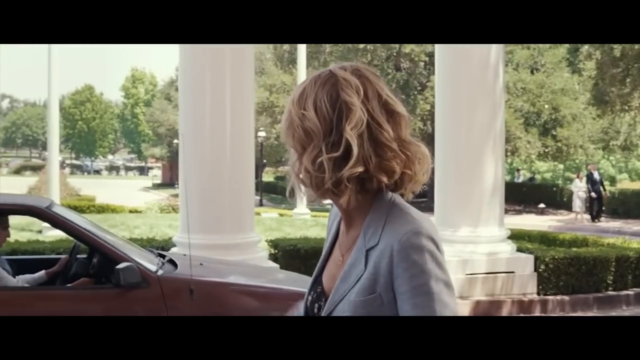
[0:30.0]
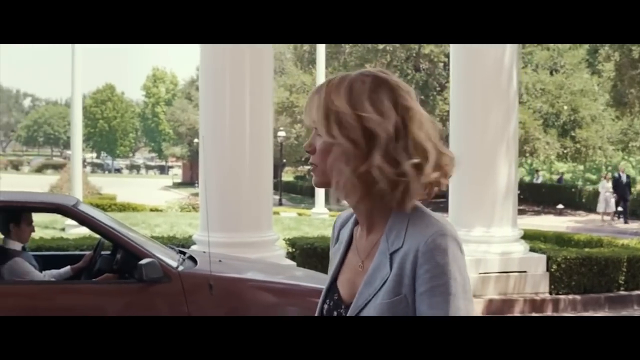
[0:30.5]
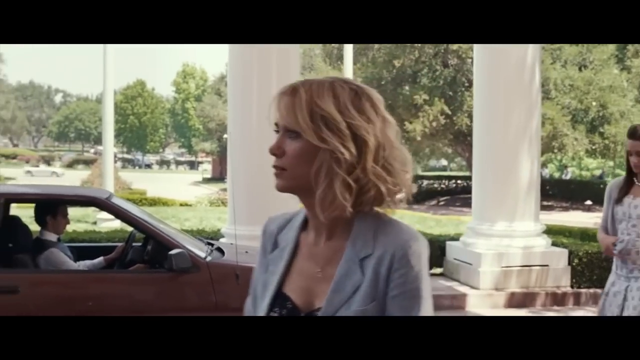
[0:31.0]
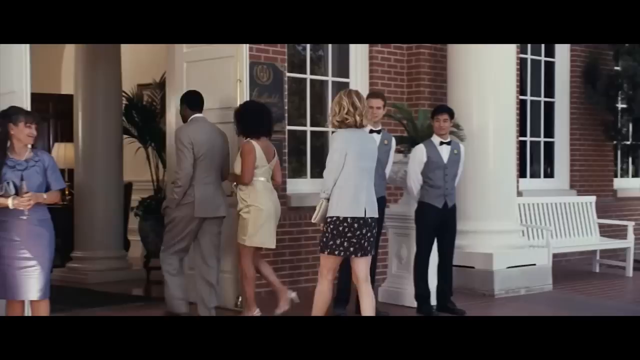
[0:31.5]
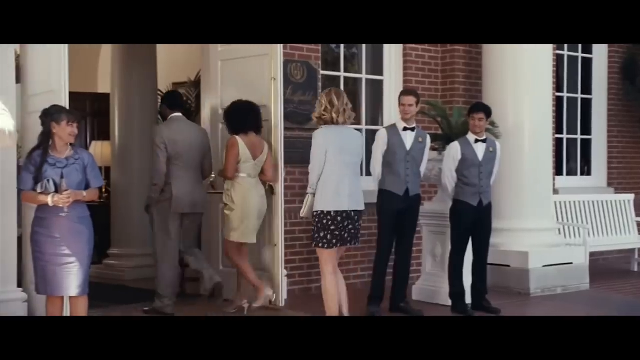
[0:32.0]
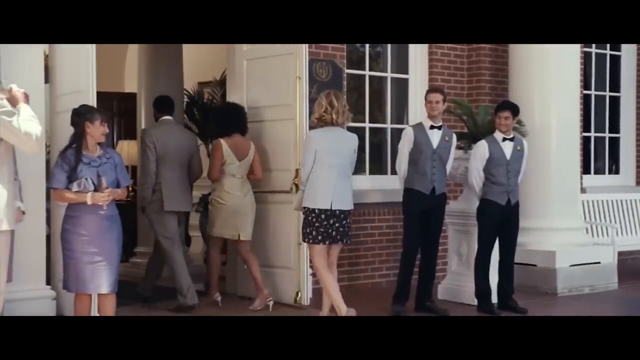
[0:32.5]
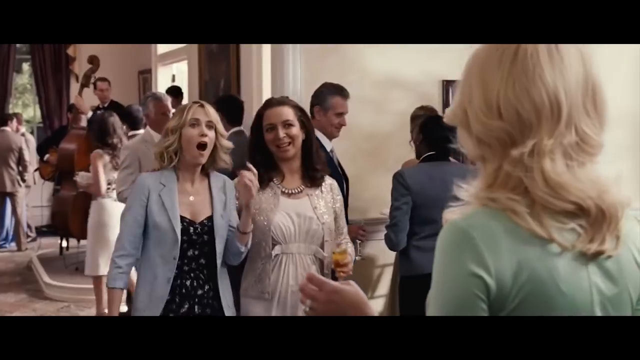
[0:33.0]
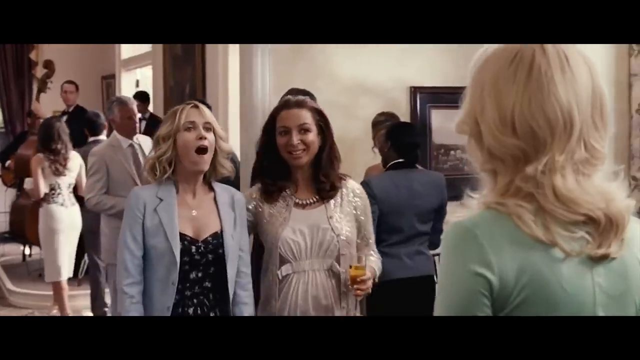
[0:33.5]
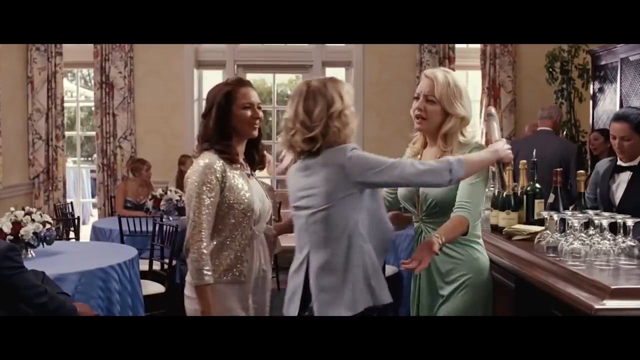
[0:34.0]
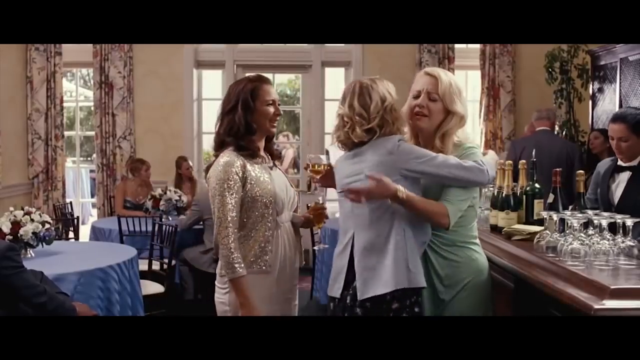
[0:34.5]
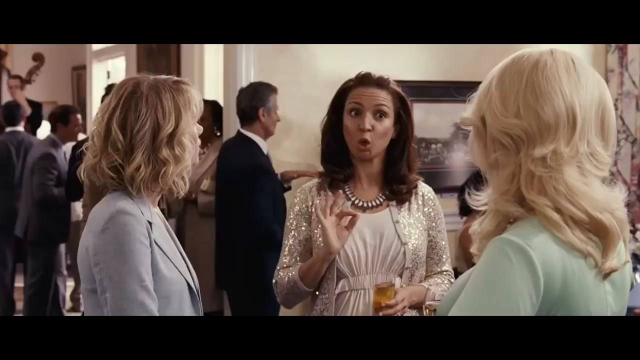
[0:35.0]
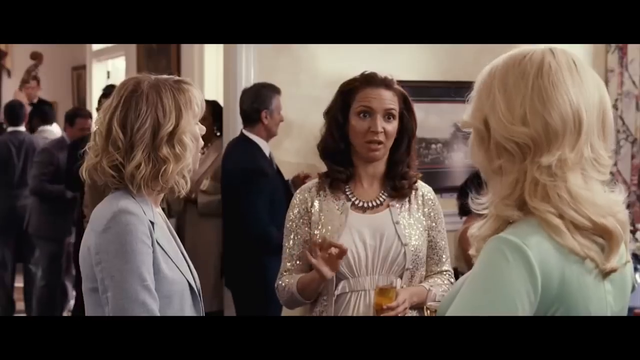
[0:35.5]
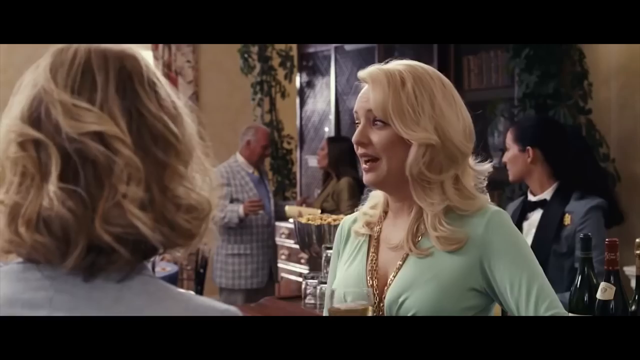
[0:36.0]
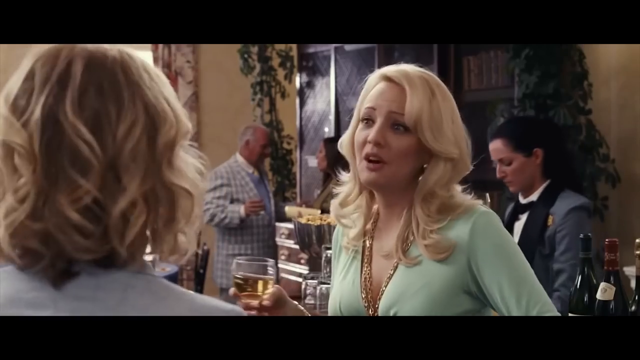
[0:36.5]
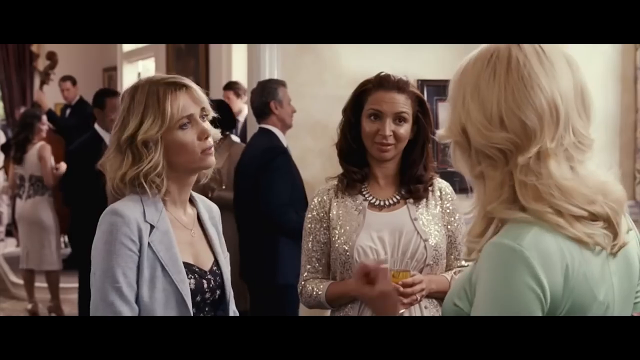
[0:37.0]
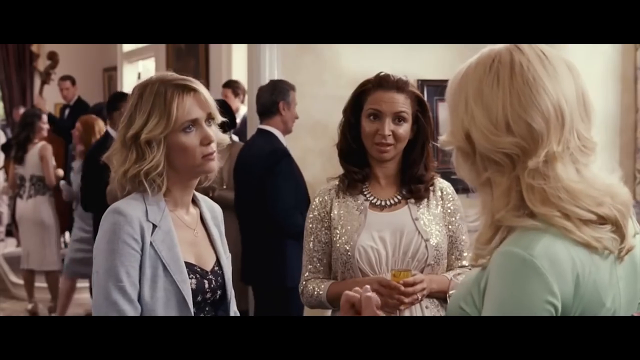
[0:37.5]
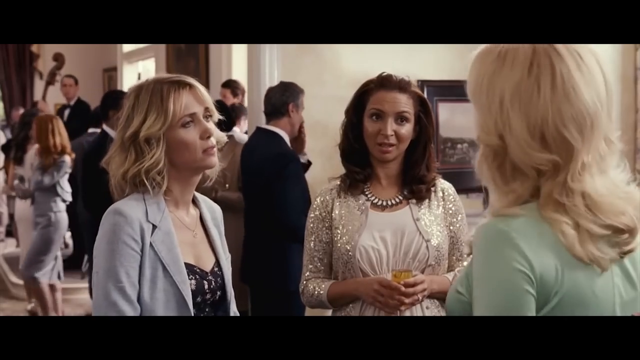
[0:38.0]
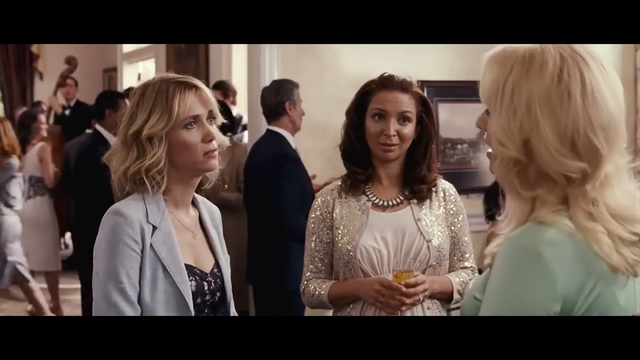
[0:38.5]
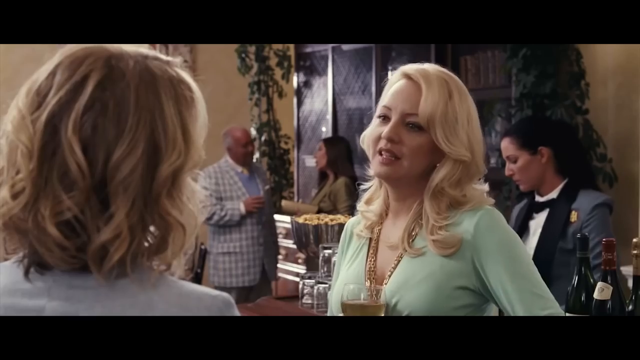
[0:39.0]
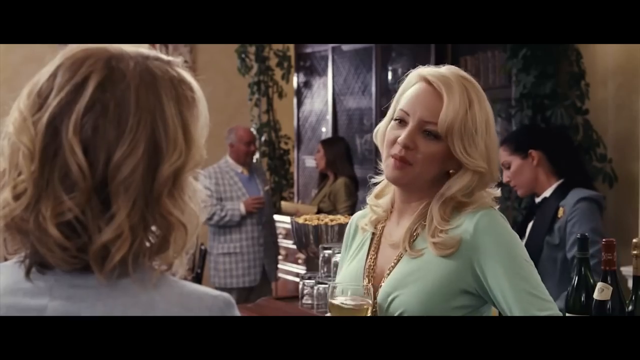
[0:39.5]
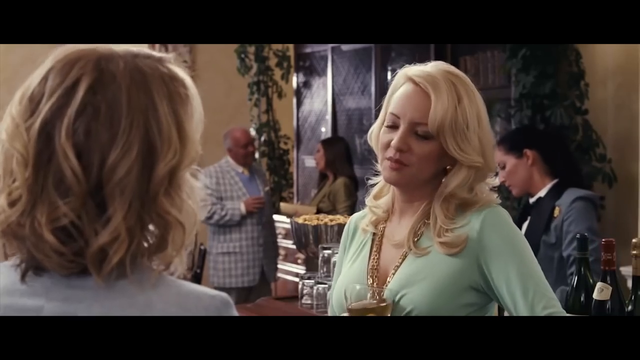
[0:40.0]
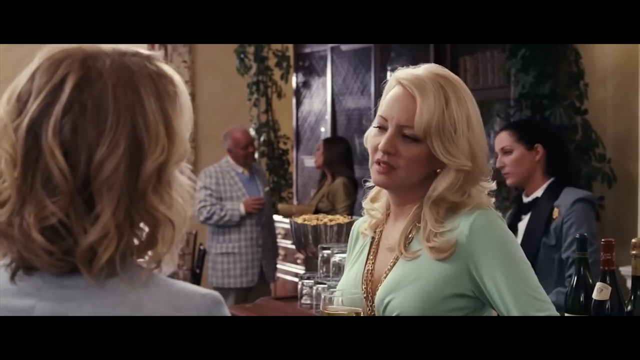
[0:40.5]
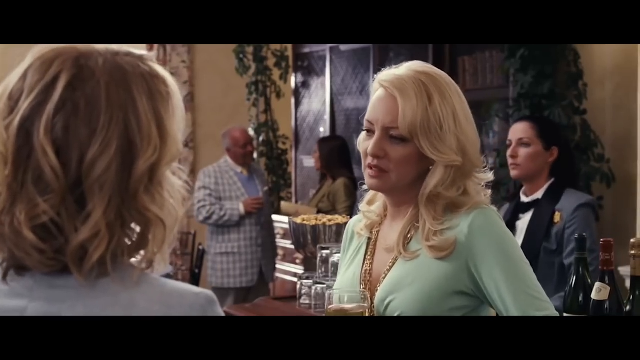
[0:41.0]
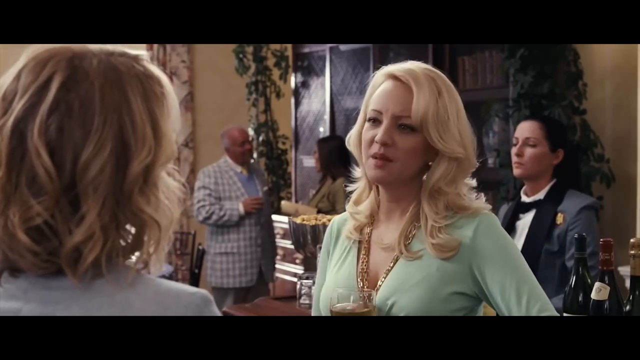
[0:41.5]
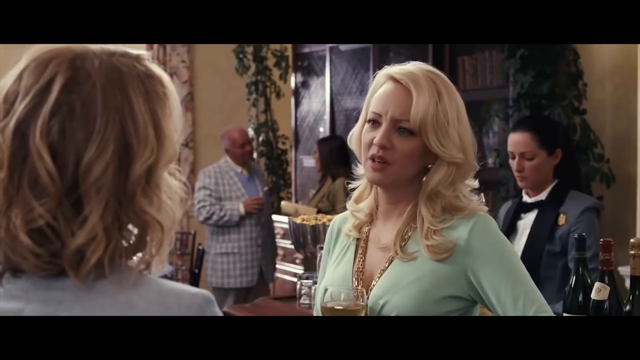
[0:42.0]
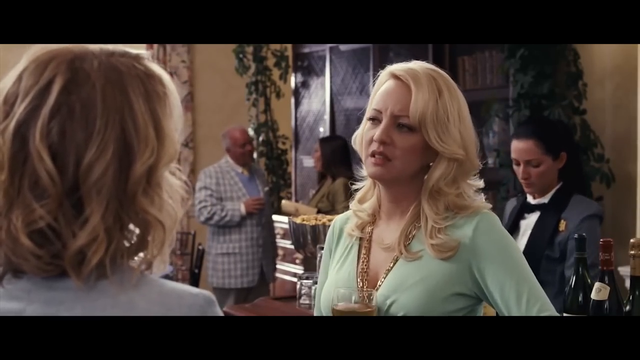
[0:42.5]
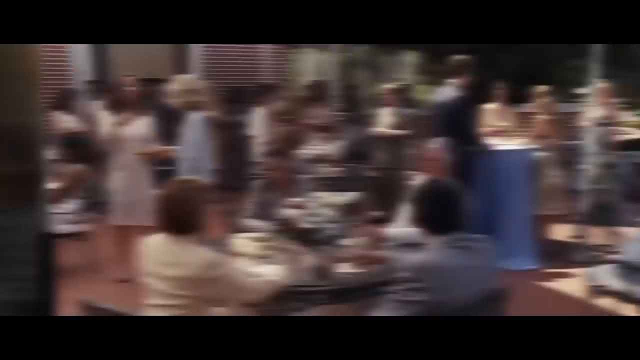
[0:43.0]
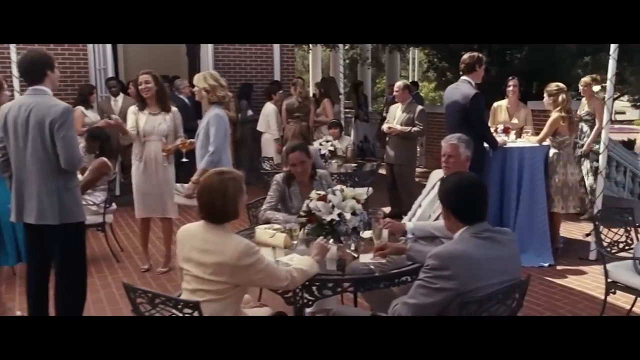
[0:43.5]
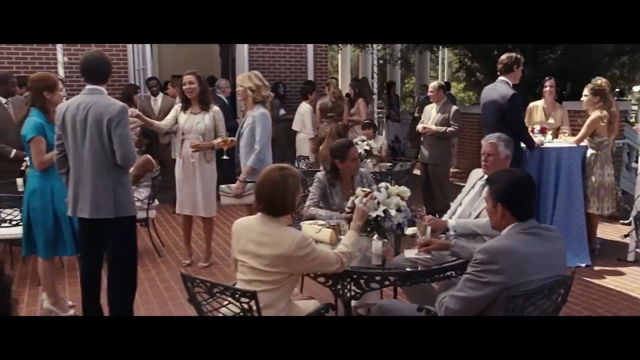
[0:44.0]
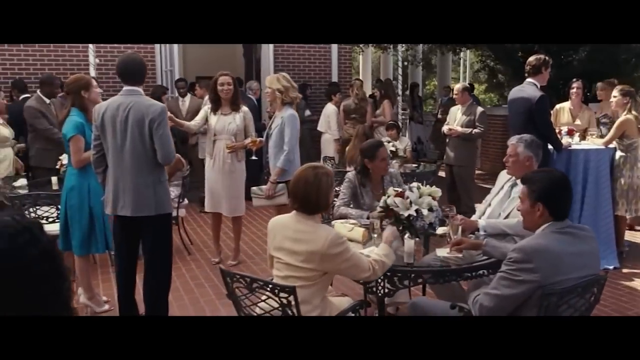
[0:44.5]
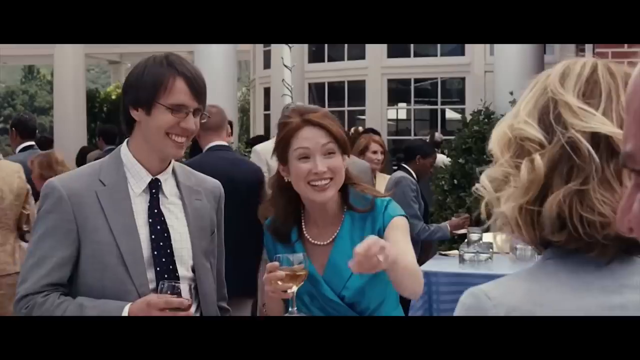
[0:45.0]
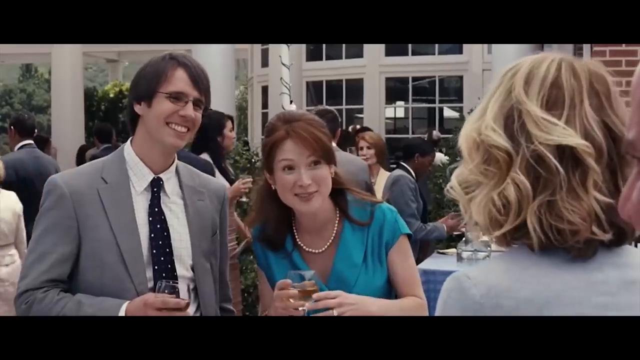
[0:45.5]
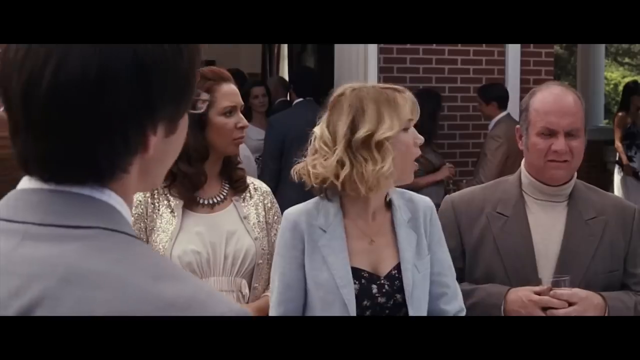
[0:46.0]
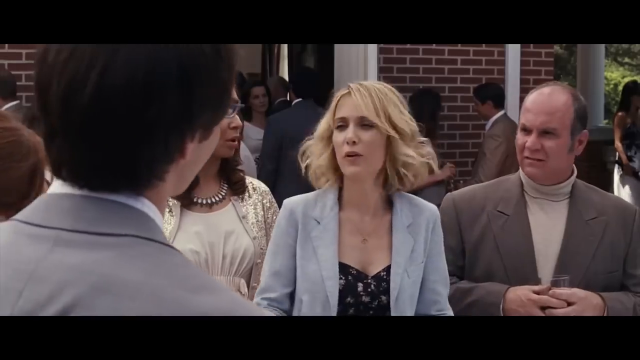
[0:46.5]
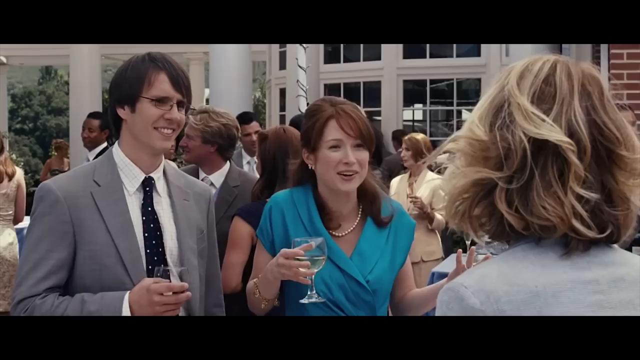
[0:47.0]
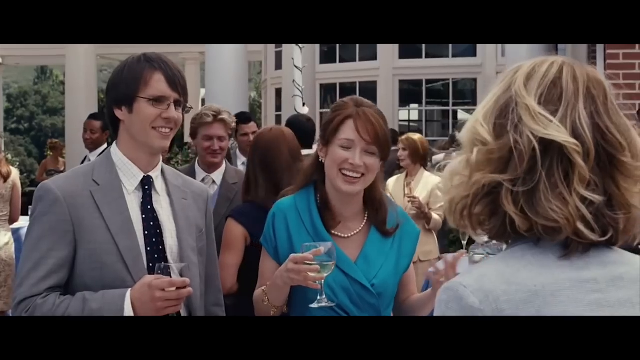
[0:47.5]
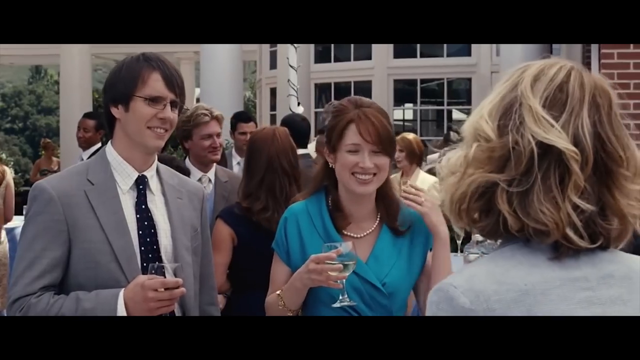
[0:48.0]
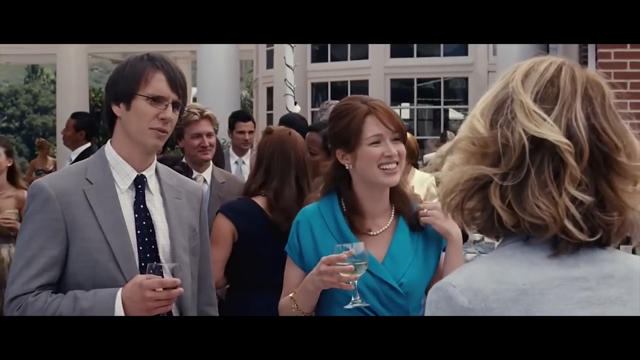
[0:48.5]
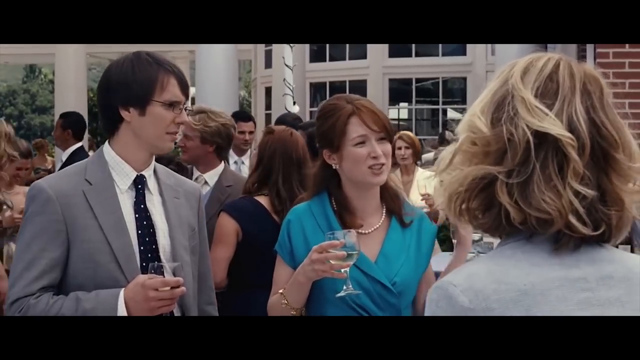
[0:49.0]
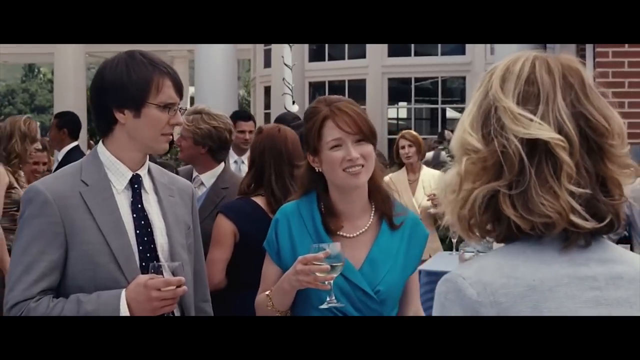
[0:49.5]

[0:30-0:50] A woman stands in the entryway of a building, looking back at a car and talking to and greeting people as she walks into the room. She enters with another woman, and the two greet or are greeted by a blonde woman wearing a green dress. The three women have a conversation while the camera goes back and forth between the blonde woman and the other two. Next they are outdoors in a backyard or back patio area at a large party with dozens of people around. They talk to another couple: a red-haired woman in a blue dress and a pearl necklace, apparently with her boyfriend, who wears a gray suit with a dark blue tie and glasses. The red-haired woman leans in, smiling as she talks. The blonde woman looks confused, looking around at two different people as the conversation continues. There are different scenes inside a large, luxurious-looking hotel room or hotel venue of the kind that could be rented for a wedding. Then the women are on the back porch talking.